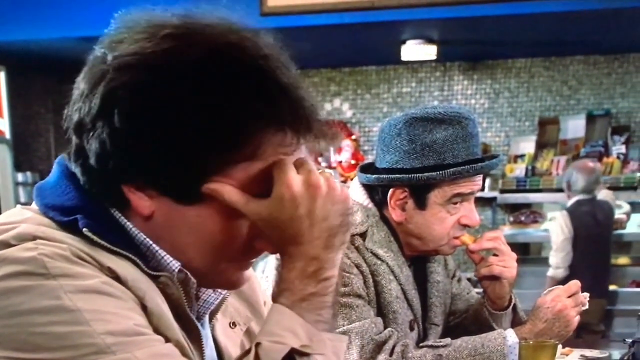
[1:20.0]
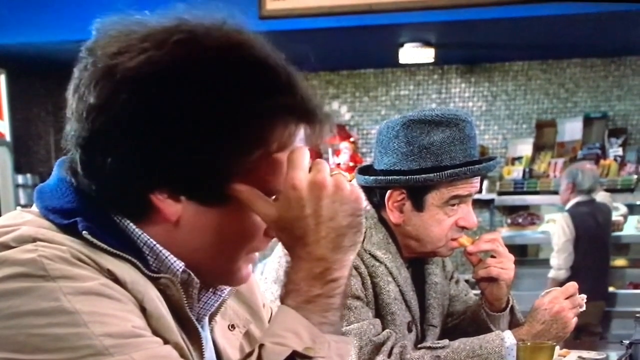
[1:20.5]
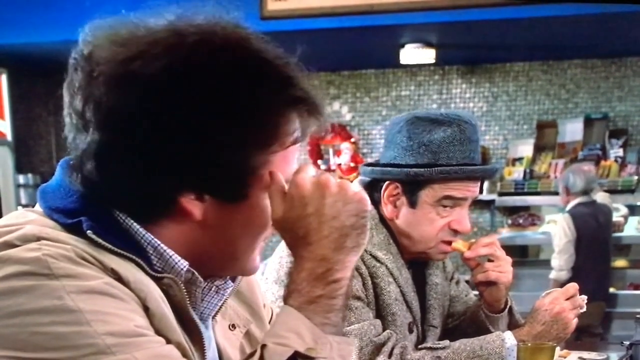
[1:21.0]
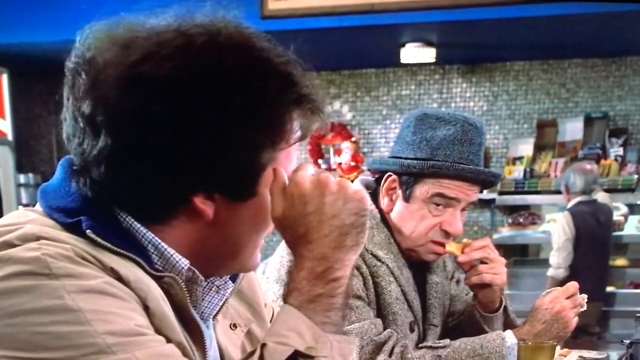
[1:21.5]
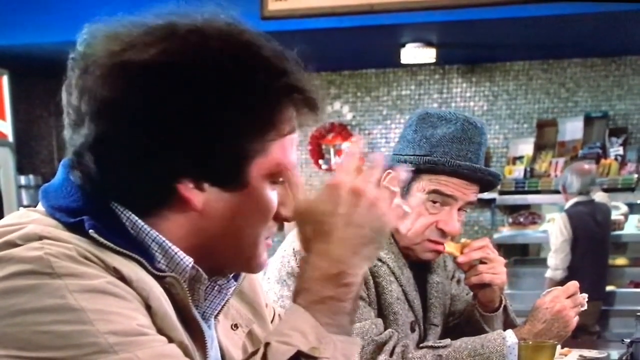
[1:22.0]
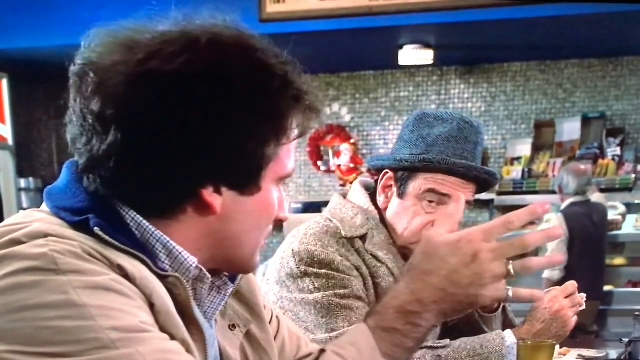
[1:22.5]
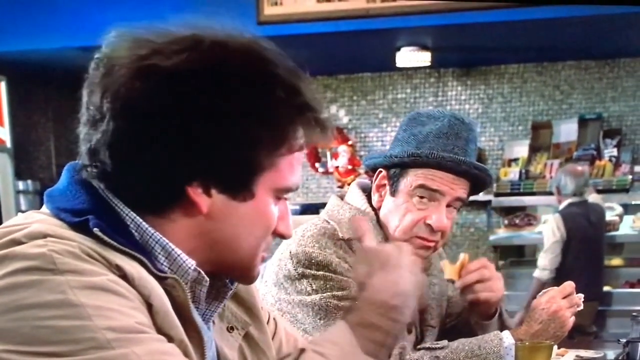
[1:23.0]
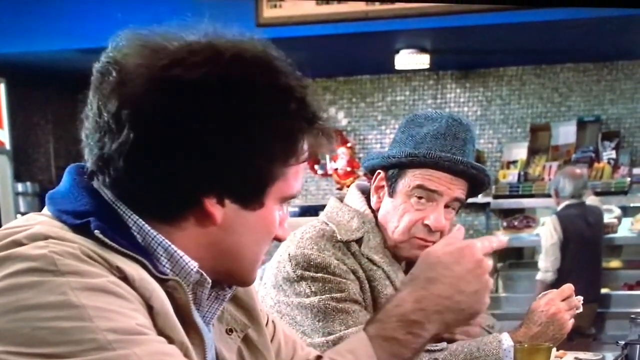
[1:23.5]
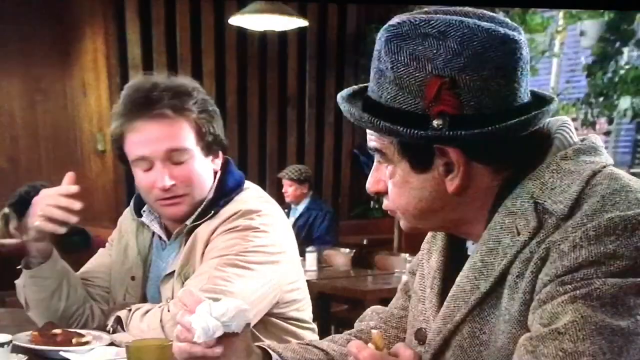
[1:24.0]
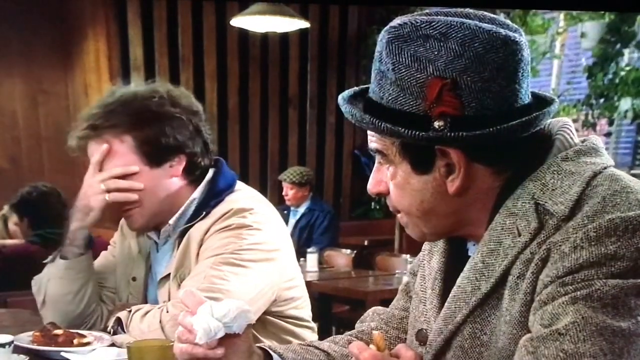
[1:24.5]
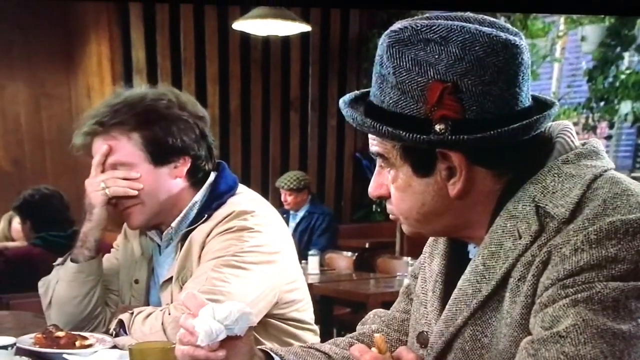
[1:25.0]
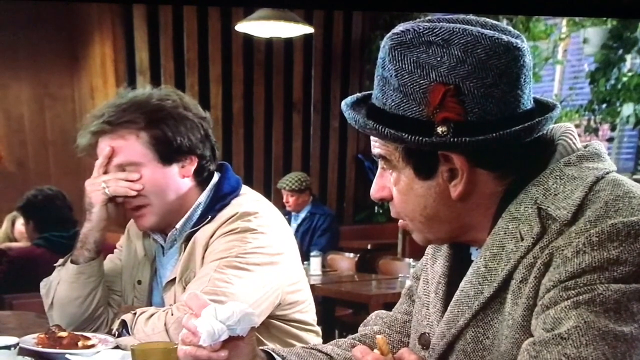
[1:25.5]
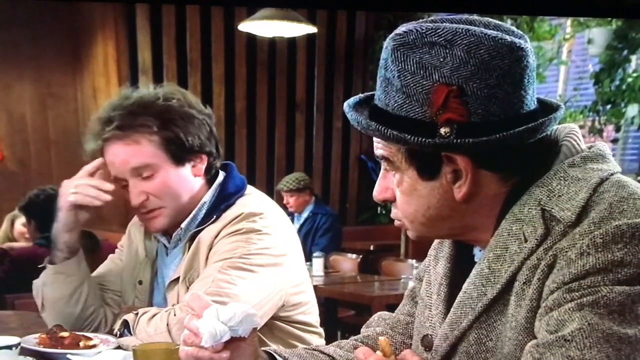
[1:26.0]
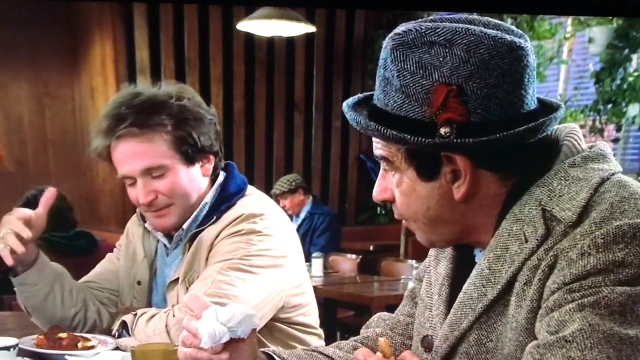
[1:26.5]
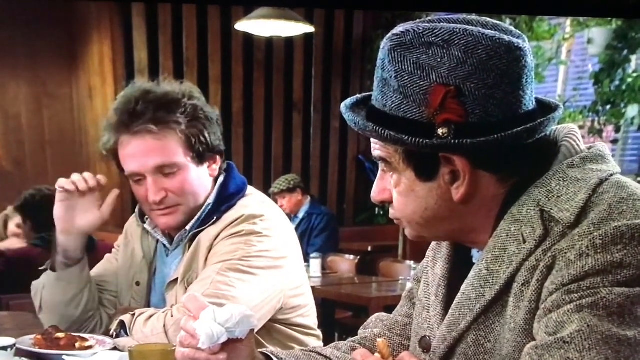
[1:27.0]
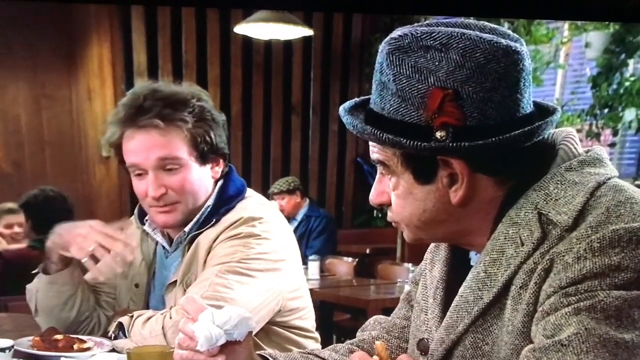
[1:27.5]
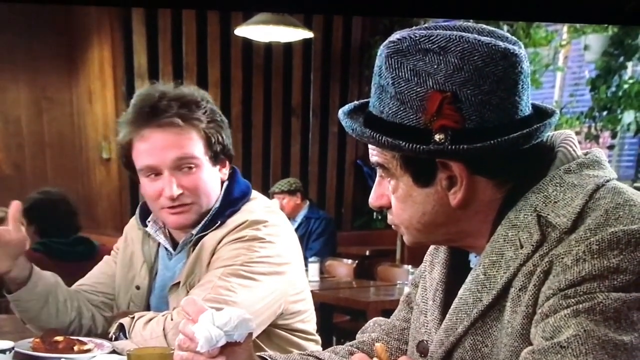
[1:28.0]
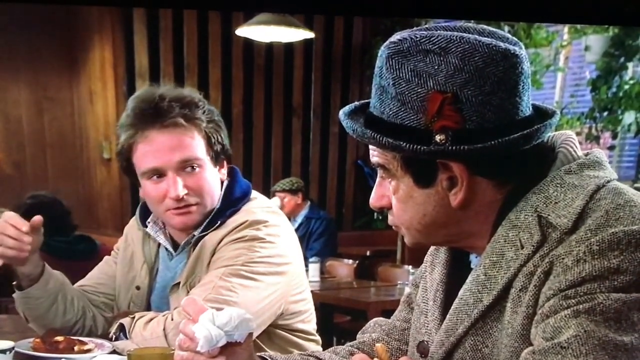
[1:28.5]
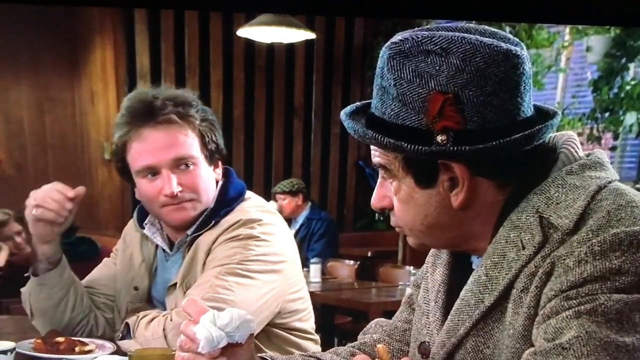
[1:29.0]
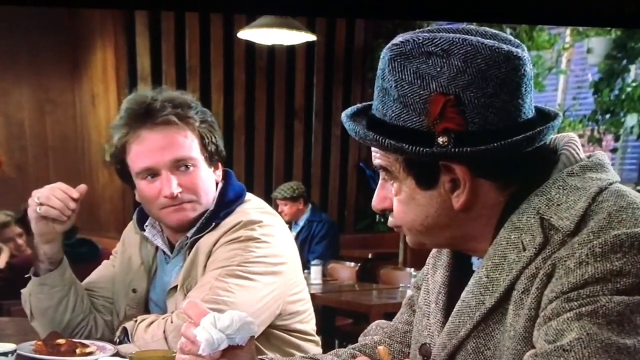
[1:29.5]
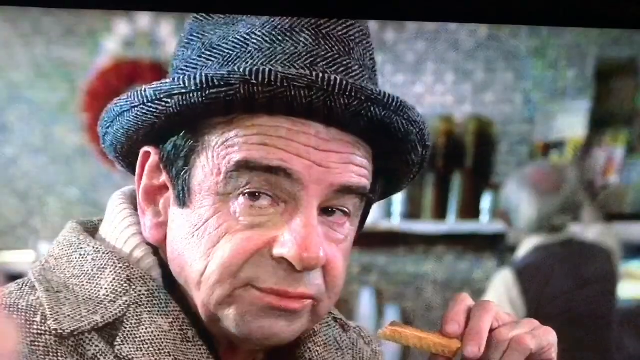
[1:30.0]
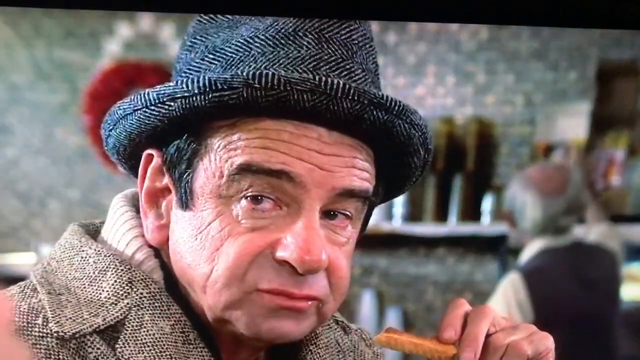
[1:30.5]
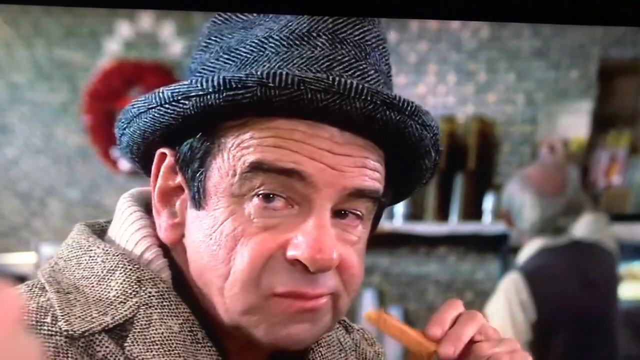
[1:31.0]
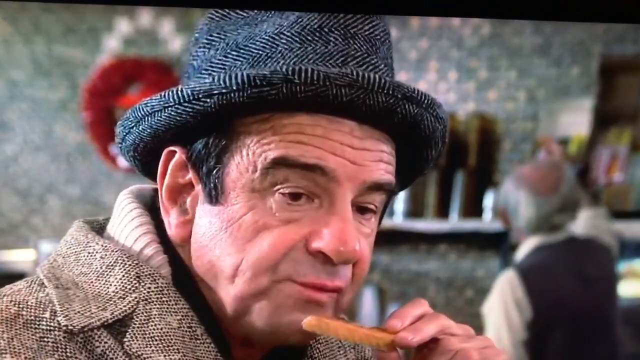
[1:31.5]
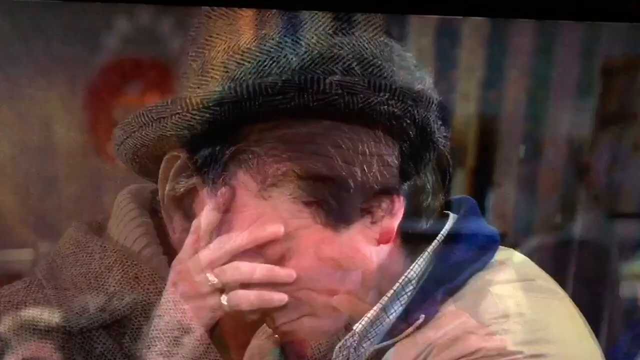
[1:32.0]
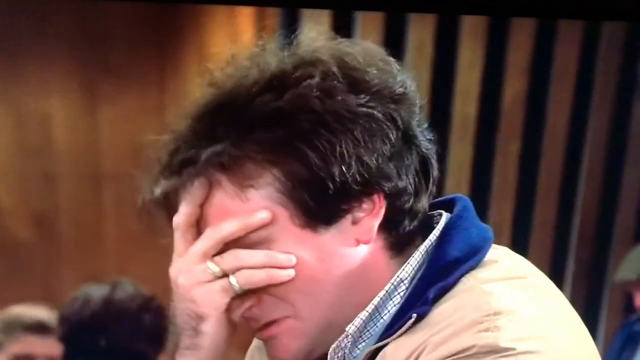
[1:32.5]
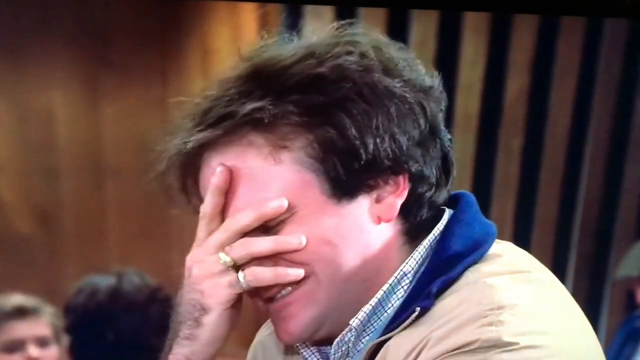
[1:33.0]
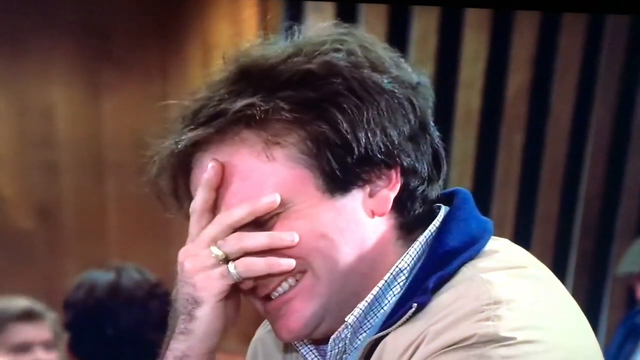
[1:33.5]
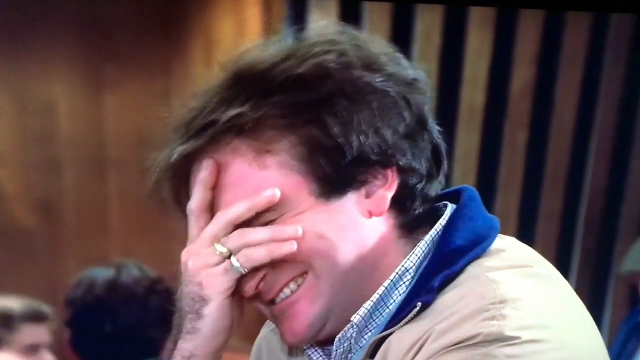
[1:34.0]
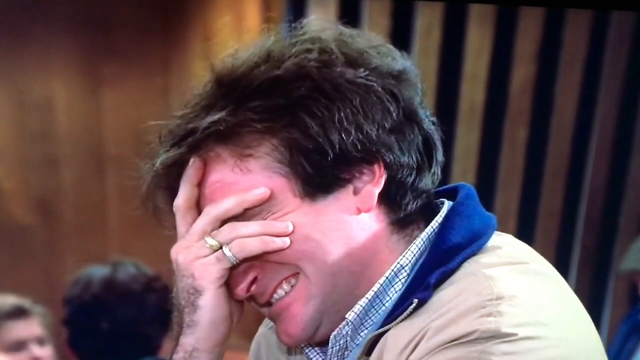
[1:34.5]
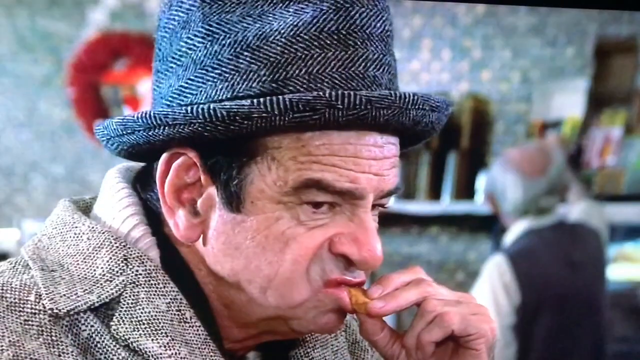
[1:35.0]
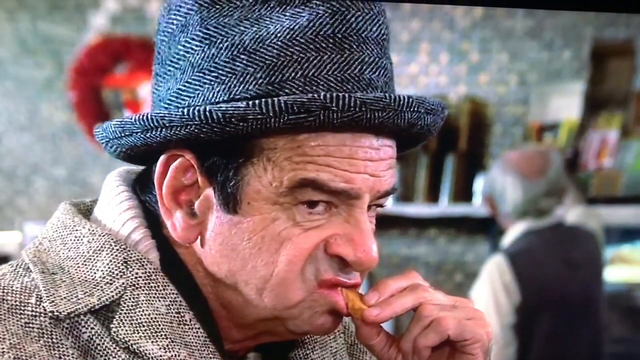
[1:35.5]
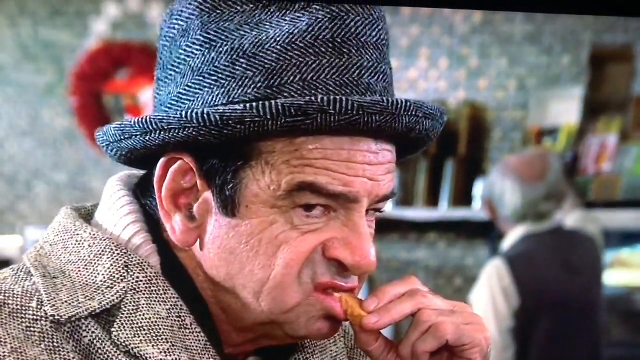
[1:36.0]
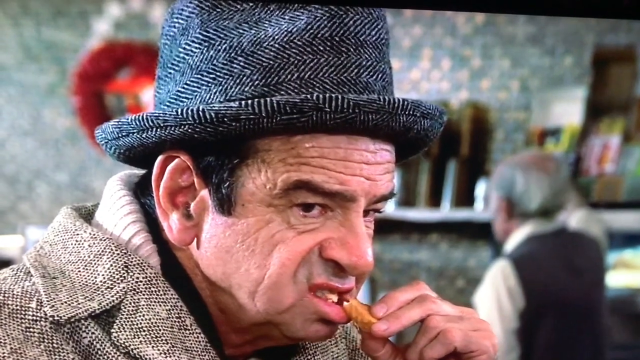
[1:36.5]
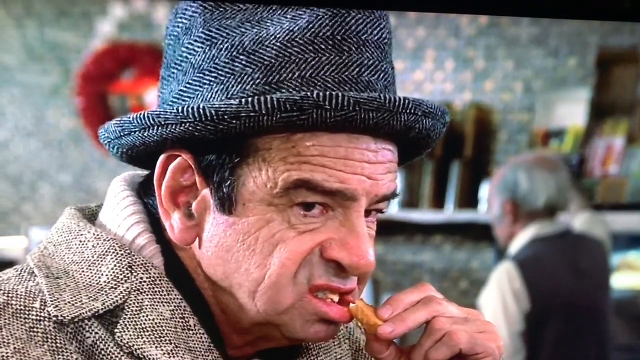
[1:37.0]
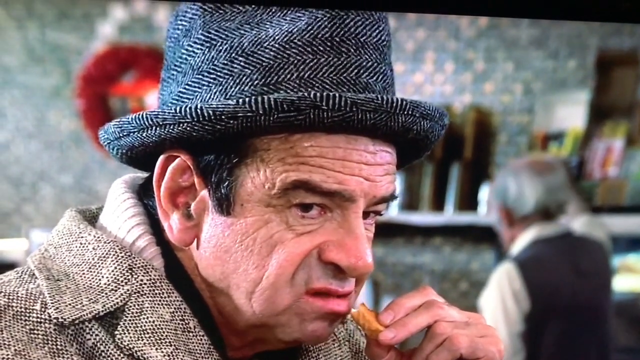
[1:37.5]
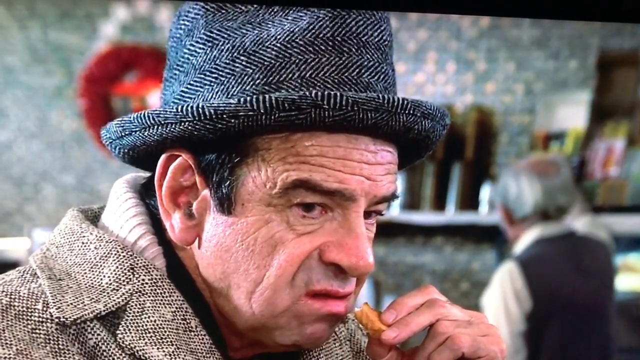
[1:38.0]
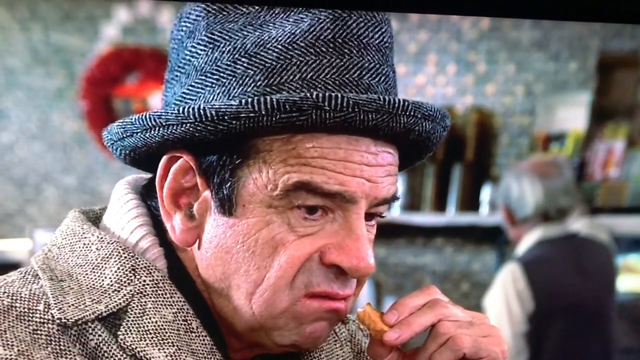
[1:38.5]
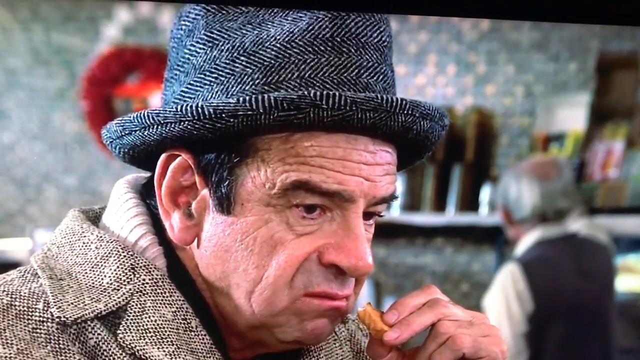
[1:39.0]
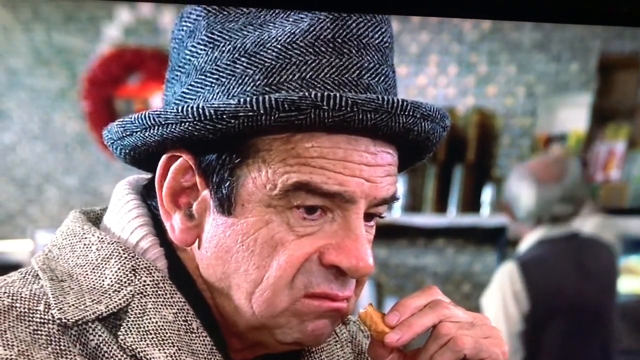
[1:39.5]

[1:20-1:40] The man with the hat, still with a bite in his mouth, looks toward the man on his right, who is saying something. The sulking man motions with his hands as if making a point, and while he speaks, the man with the hat lowers the hand holding his food and listens. The sulking man speaks a few words and then looks at the man with the hat, who says nothing and keeps eating. The sulking man still has his hand on his face and seems to start laughing; his shoulders move around a lot. The man who is eating slowly looks toward him out of the corner of his eye, takes a quick bite, and takes a quick look at the man on his right, but the shot cuts off there and what is happening on the right is not shown.